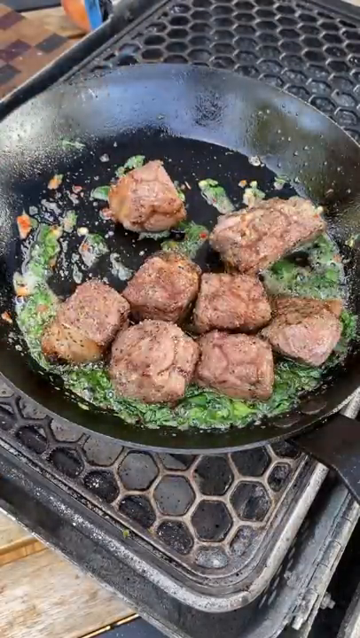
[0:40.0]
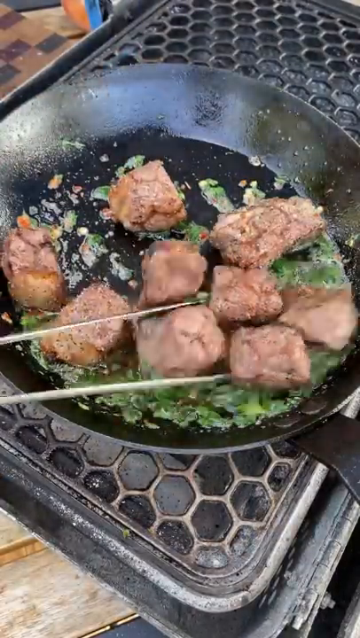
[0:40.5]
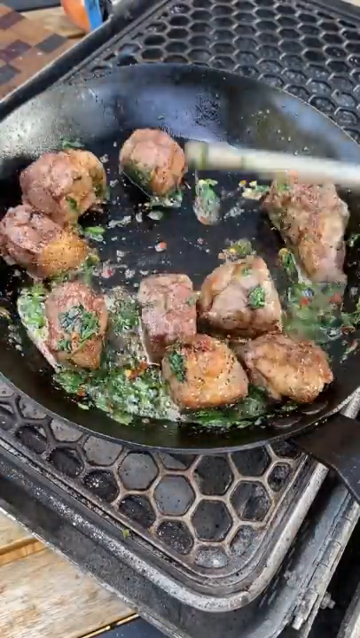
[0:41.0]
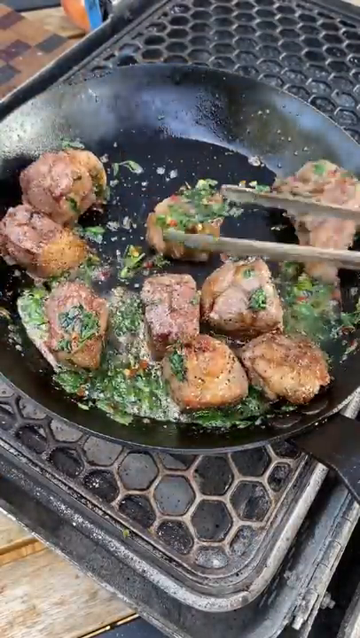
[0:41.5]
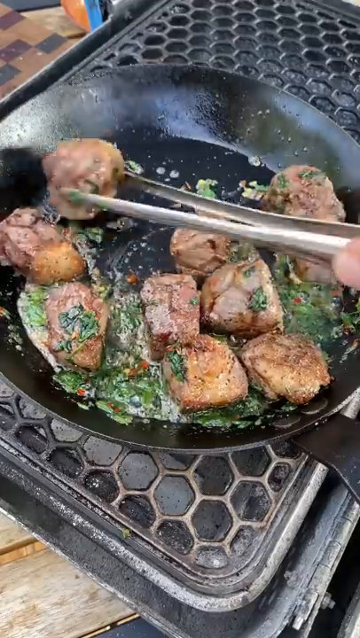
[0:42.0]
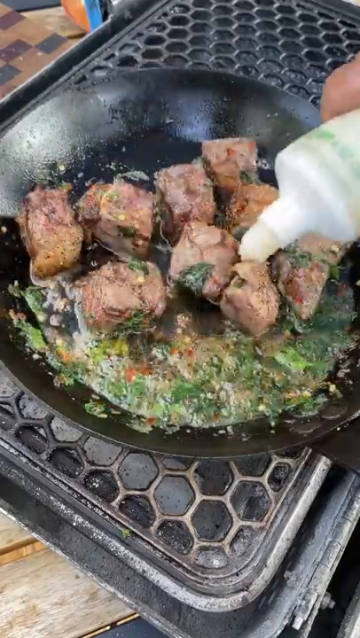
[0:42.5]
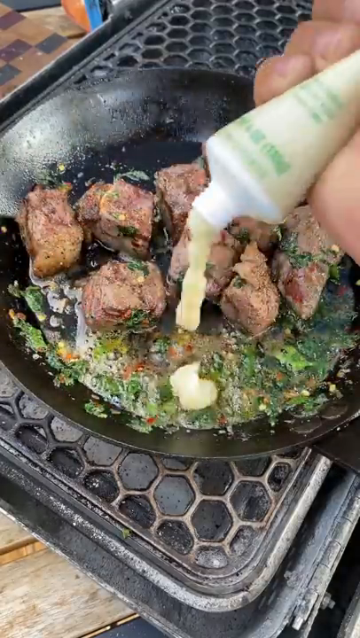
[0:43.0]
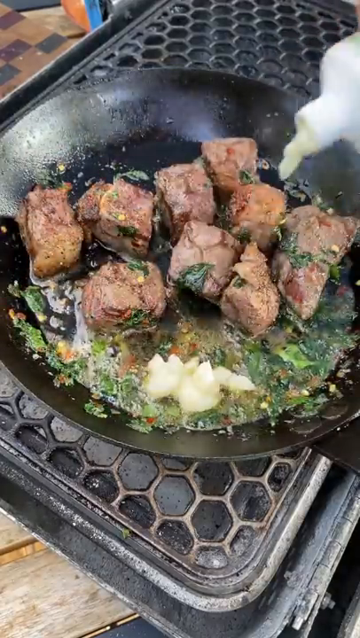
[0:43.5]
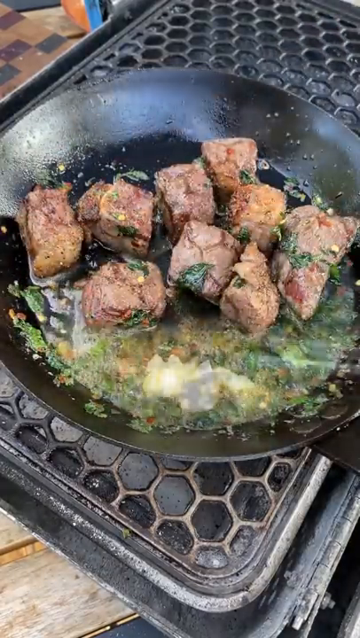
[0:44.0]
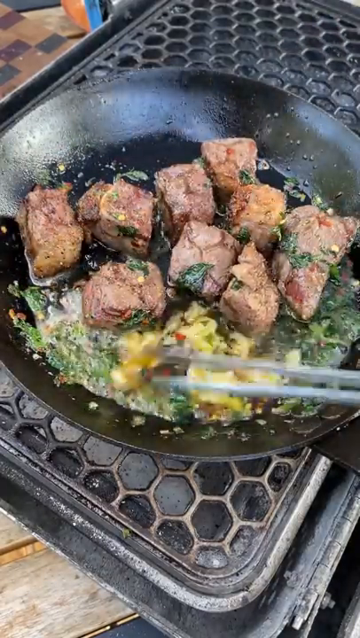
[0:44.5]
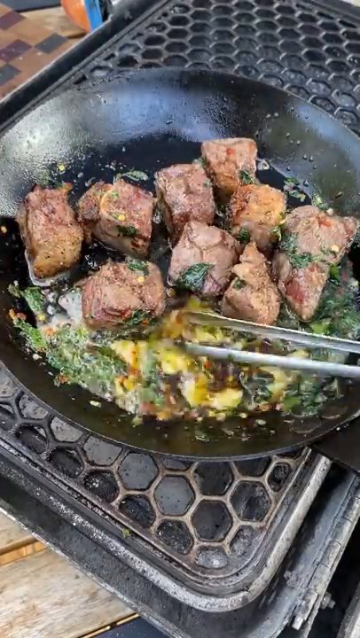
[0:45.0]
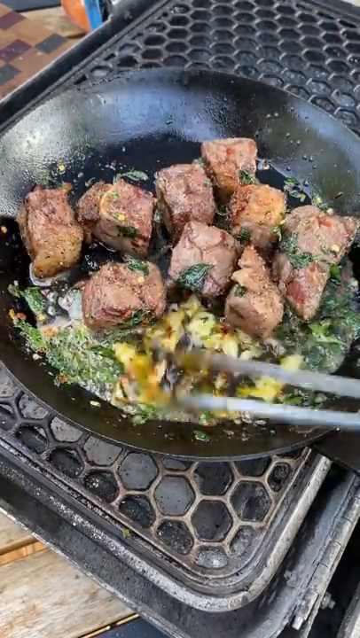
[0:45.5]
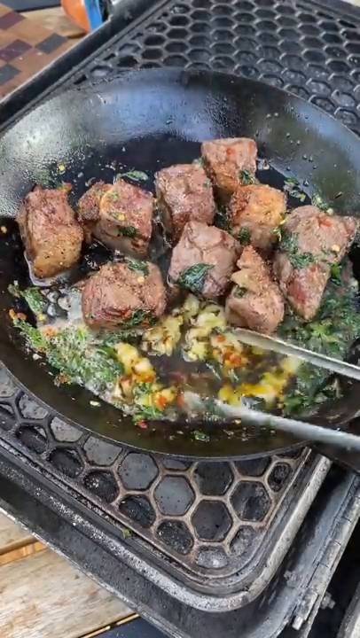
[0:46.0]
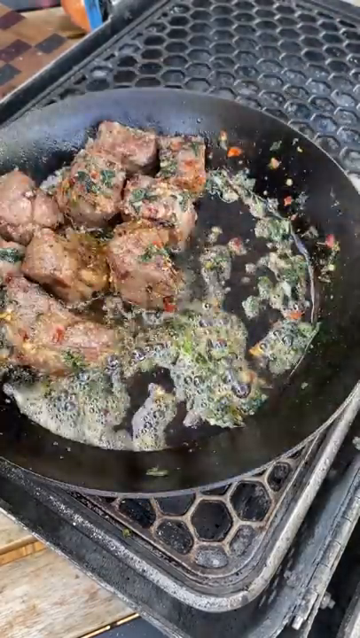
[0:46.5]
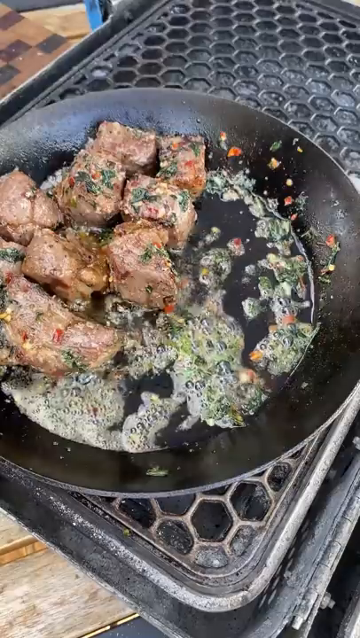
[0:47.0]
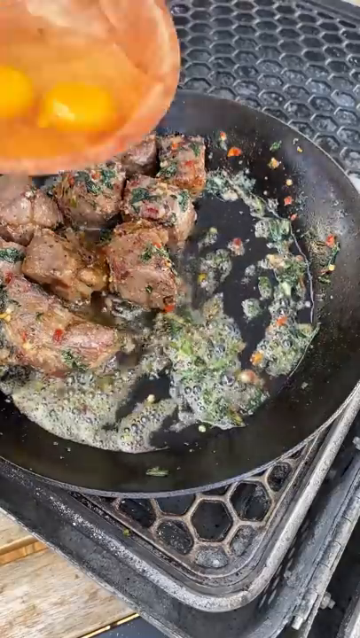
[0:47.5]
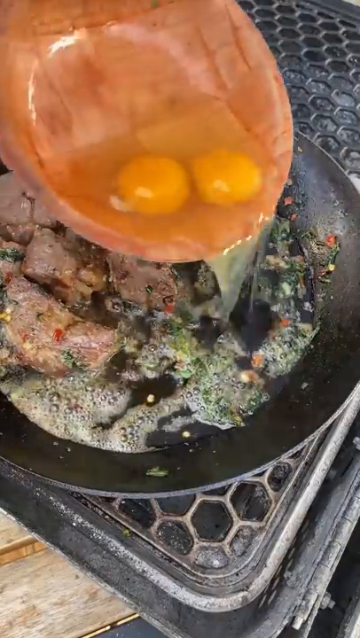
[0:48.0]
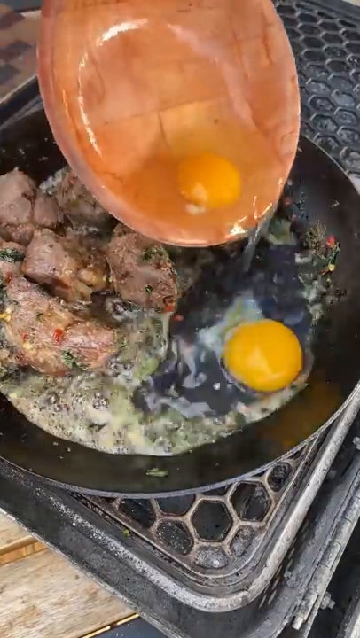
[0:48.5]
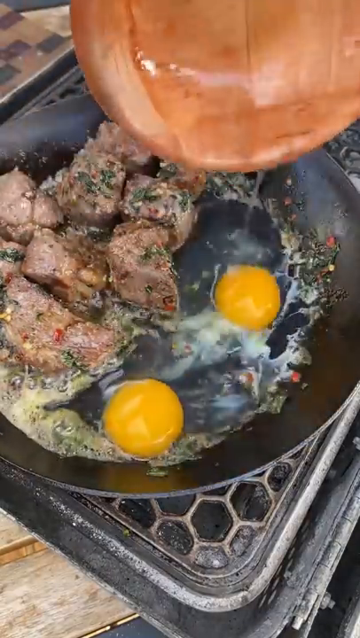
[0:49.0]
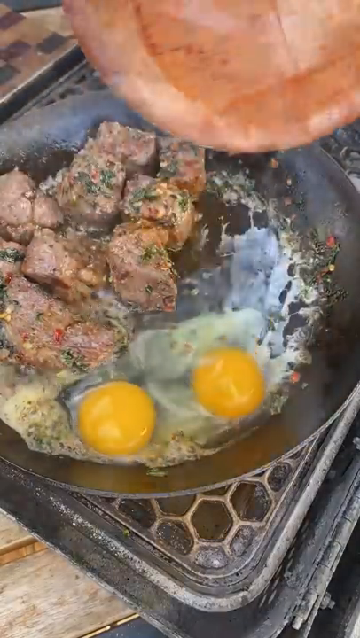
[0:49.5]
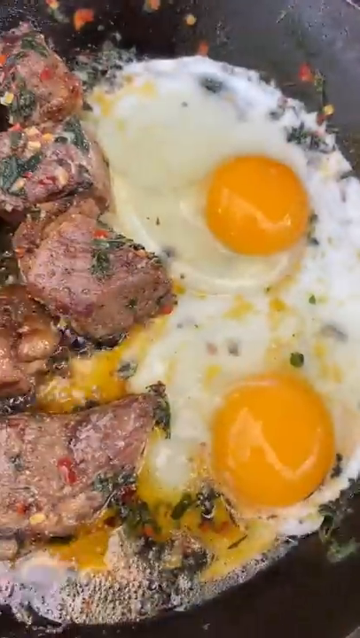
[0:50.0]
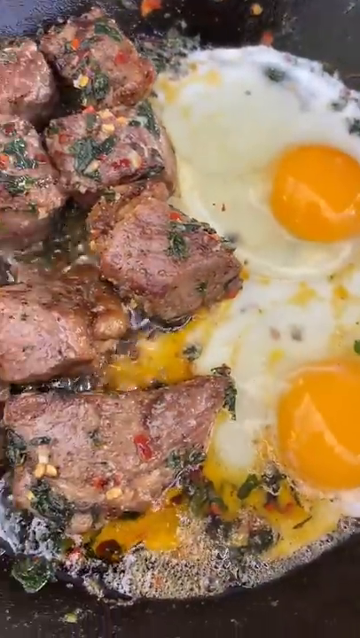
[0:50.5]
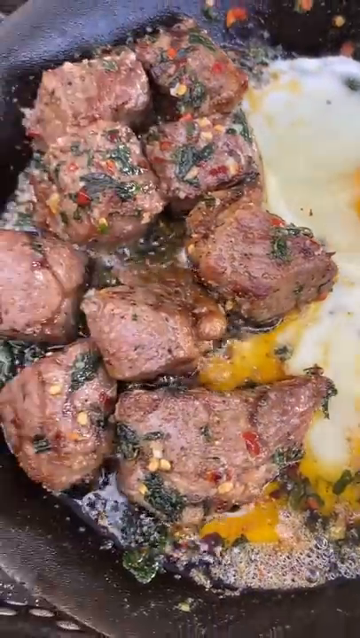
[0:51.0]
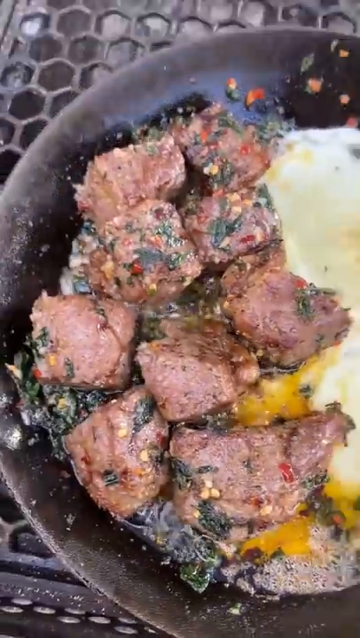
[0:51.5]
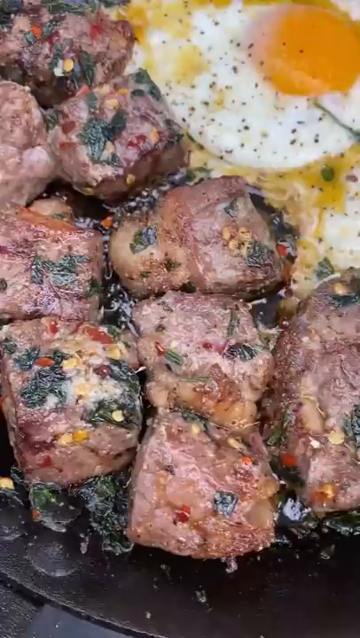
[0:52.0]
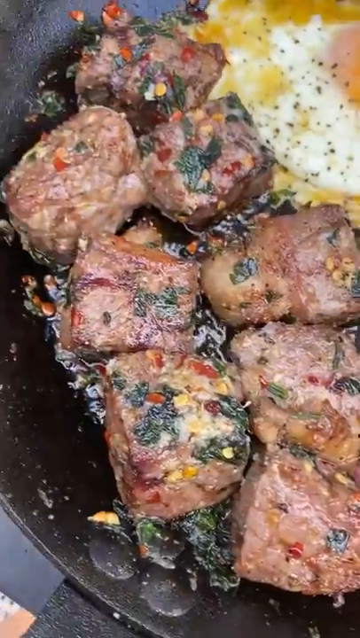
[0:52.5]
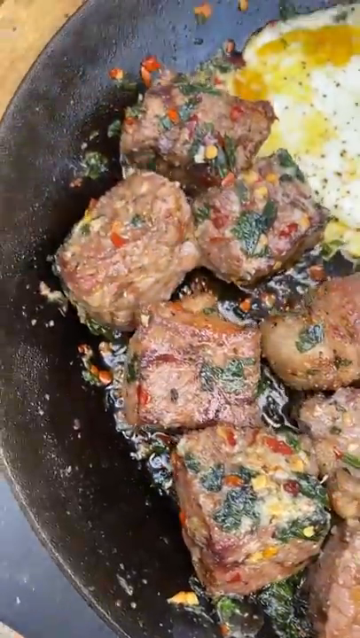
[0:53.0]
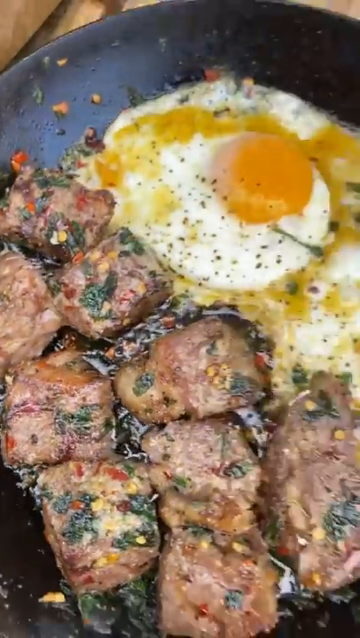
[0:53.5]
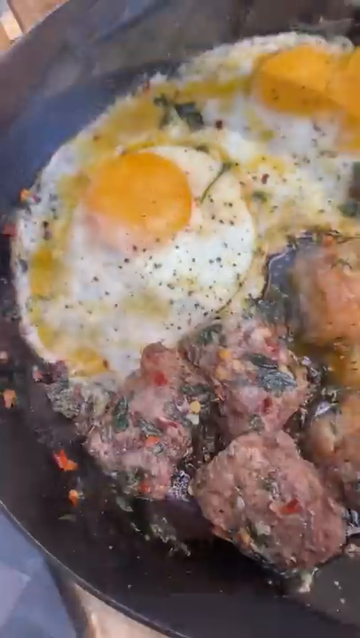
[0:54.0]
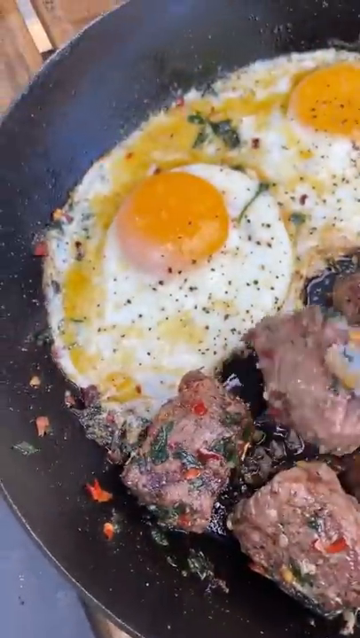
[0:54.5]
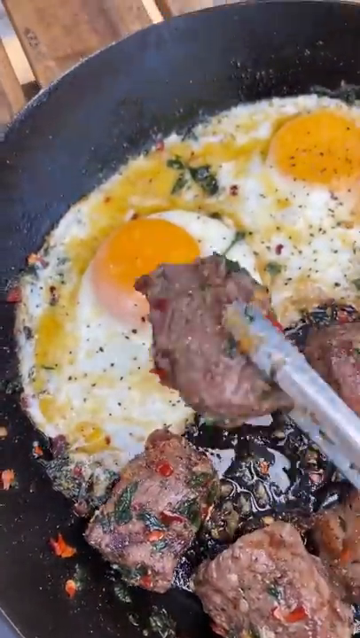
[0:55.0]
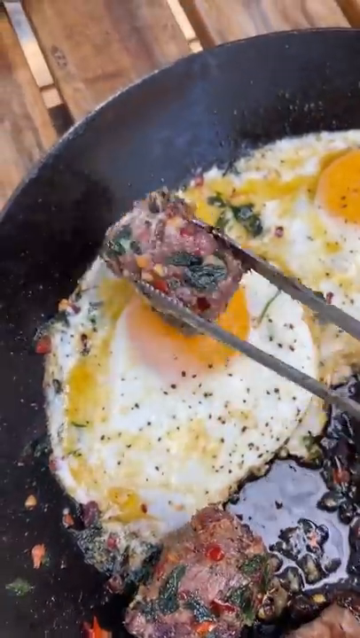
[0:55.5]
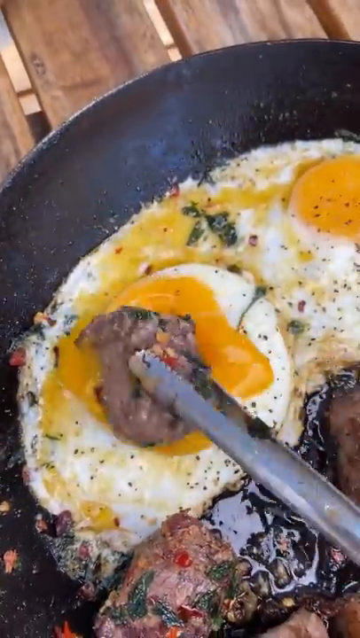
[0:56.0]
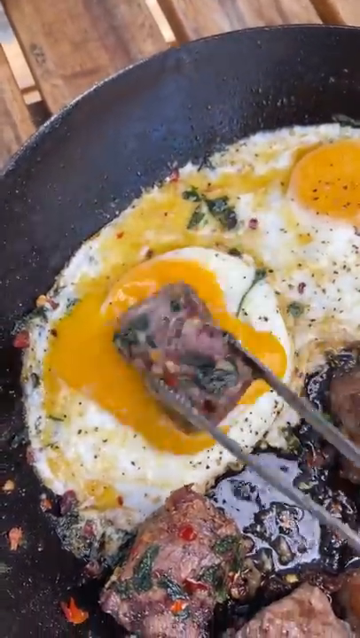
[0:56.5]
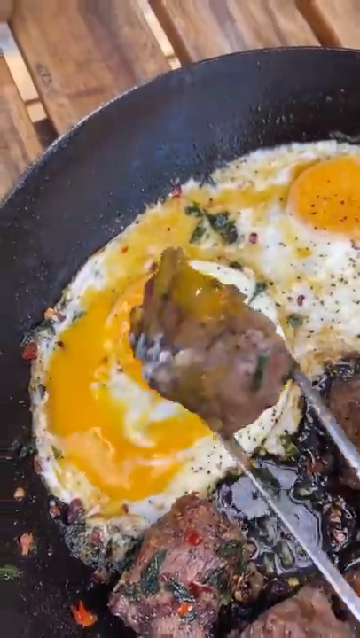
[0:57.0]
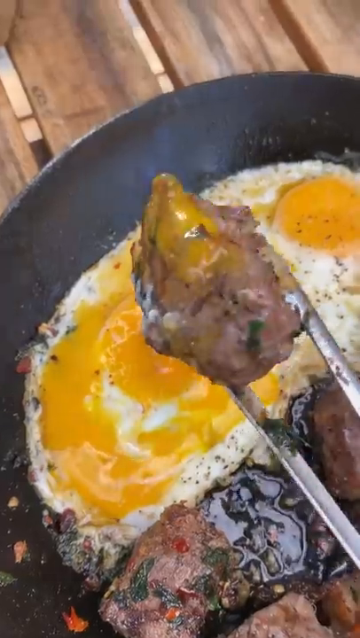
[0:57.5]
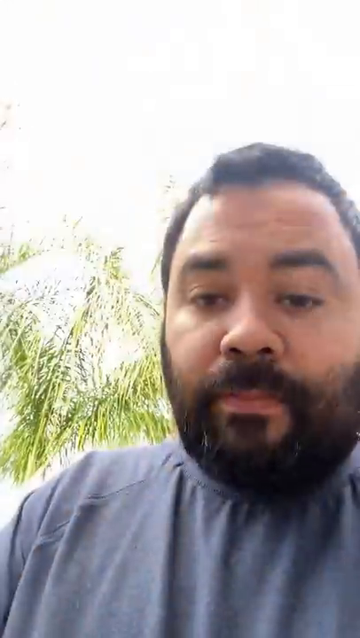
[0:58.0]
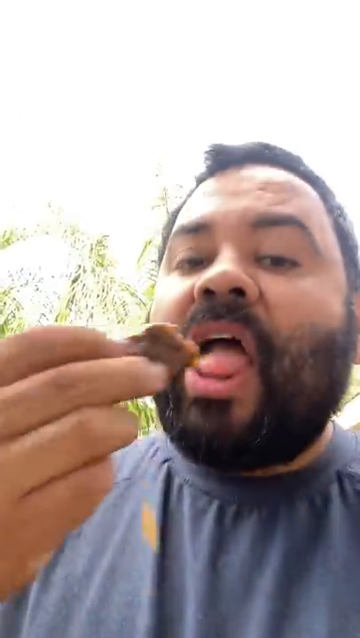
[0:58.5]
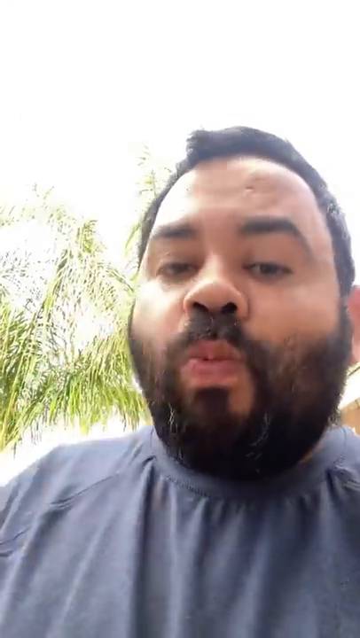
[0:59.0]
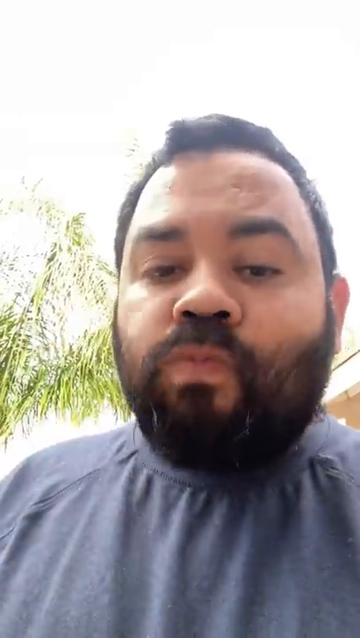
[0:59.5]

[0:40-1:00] The eight big chunks of steak are in the cilantro/parsley oil with pepper flakes, and the man works them to pick up the seasoning. He adds some kind of buttery paste; it is unclear what it is, possibly wasabi or garlic paste. He puts two eggs in, cooked sunny side up; the yolks are bright yellow and there is a lot of seasoning on the eggs. He dips the steak into the egg yolk and pops a piece into his mouth with his hands, taking a bite. The man has a round face, a receding hairline and a beard.